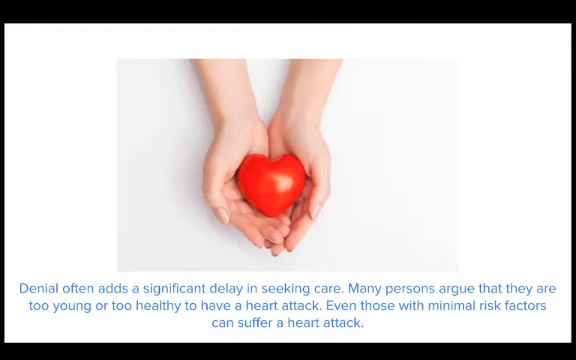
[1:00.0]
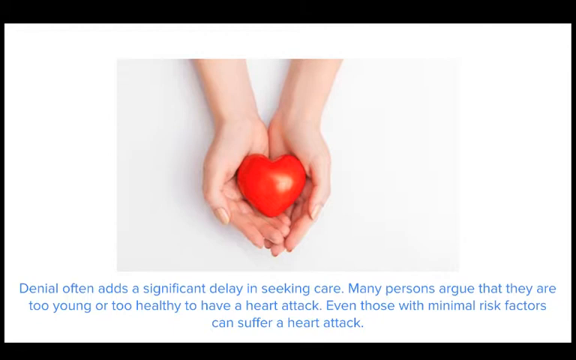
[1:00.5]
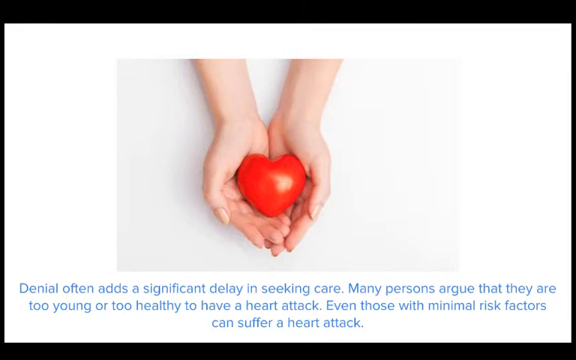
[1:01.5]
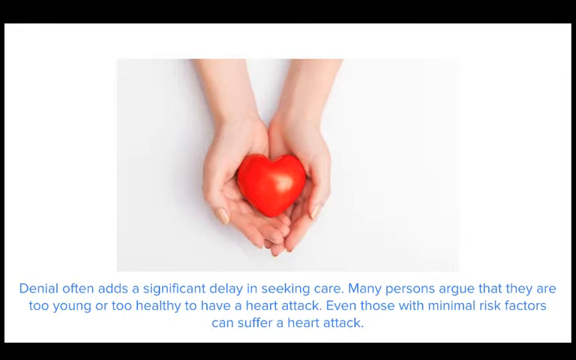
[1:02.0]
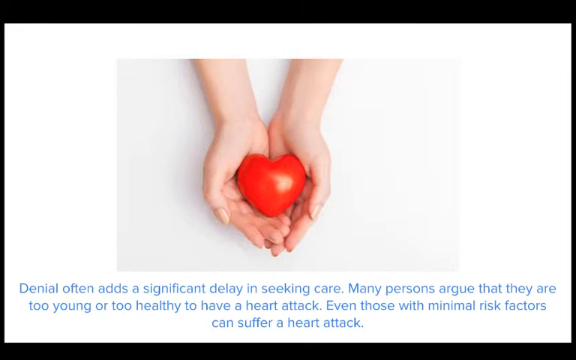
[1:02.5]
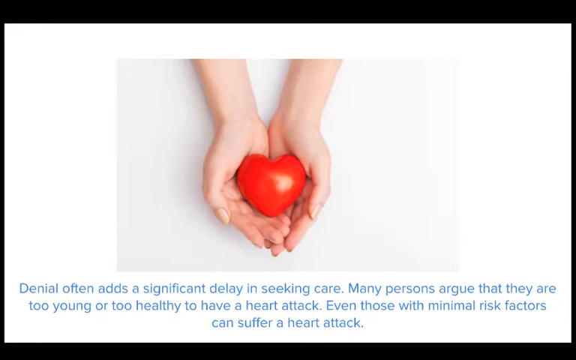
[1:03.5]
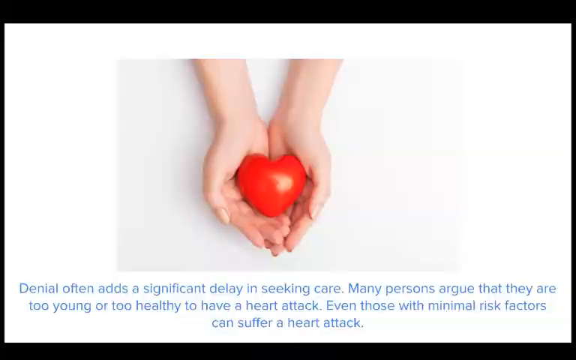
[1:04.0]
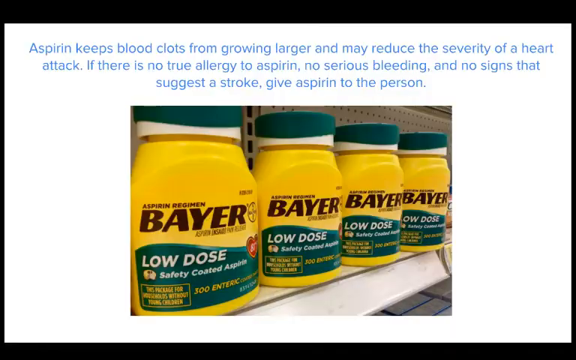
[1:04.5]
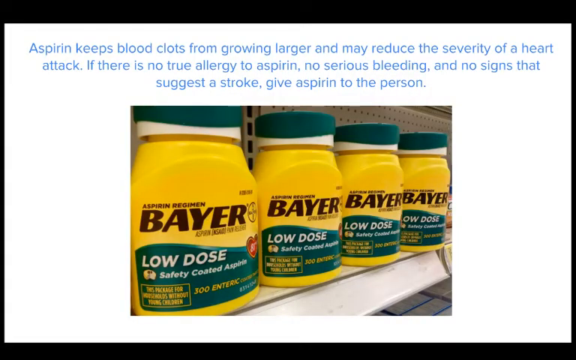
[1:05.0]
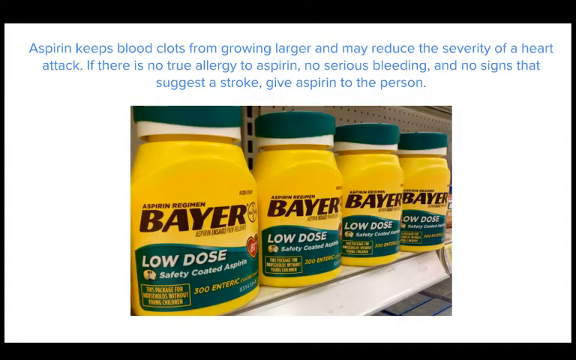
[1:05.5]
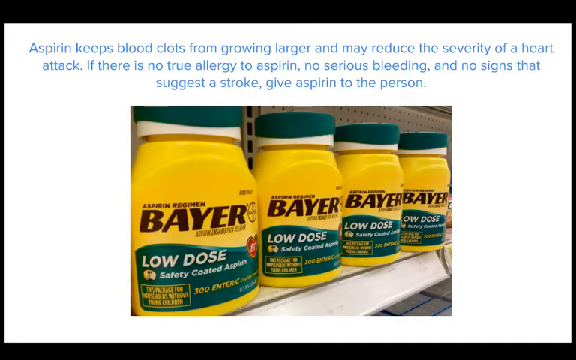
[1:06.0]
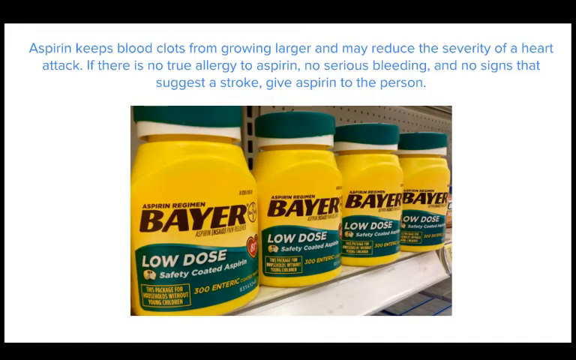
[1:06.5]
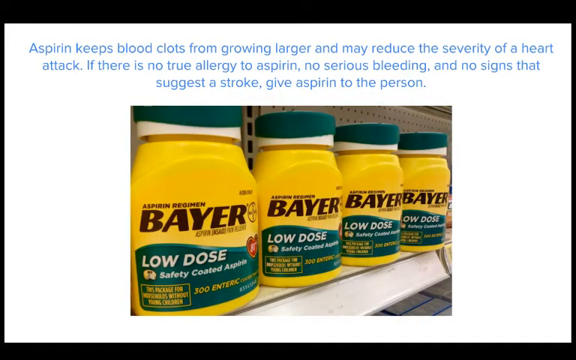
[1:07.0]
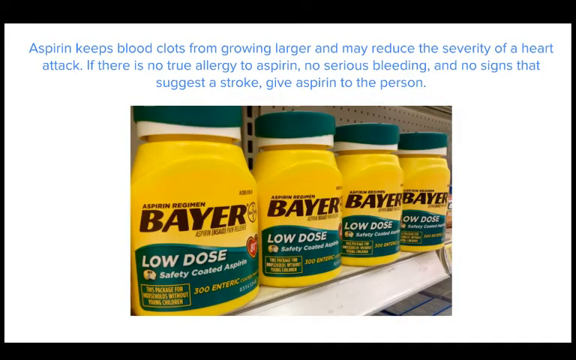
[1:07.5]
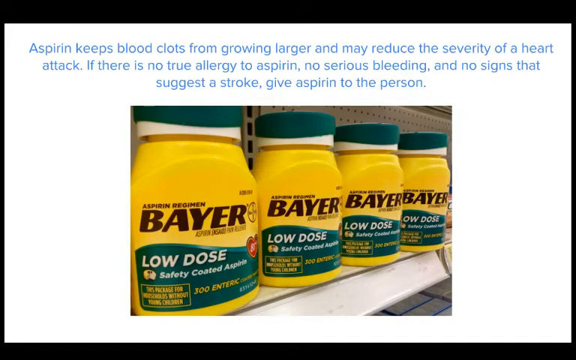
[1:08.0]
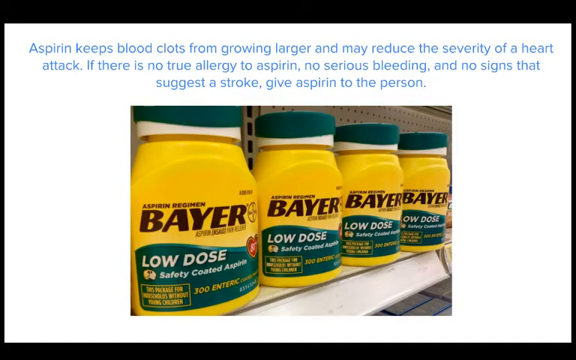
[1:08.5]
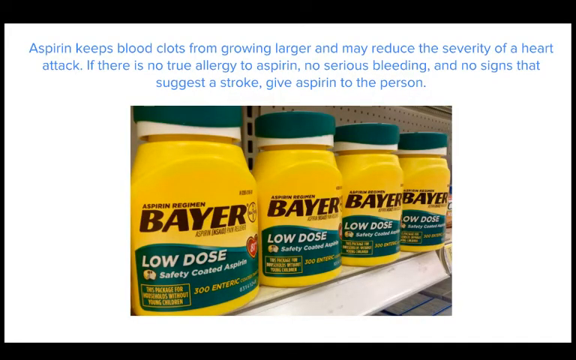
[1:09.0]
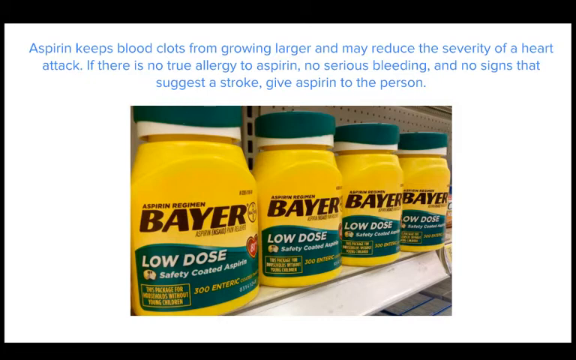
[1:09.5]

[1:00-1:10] The screen shows the white background with the two cupped hands extending down from the top of the screen holding a red love heart, and blue text at the bottom reading "Denial often adds a significant delay in seeking care. Many persons argue that they are too young or too healthy to have a heart attack. Even those with minimal risk factors can suffer a heart attack." The video transitions to a new white screen. Blue text at the top reads: "aspirin keeps blood clots from growing larger and may reduce the severity of a heart attack. If there's no true allergy to aspirin, no serious bleeding, and no signs that suggest a stroke, give aspirin to the person." In the middle of the screen is an image of four yellow bottles with green lids and green labels on the bottom part of each bottle. A brown tag on the top of each bottle says "buyer, aspirin regimen", and white text over the green label reads "low-dose, safety-coated aspirin", with some smaller yellow text at the bottom of the green label. The four aspirin bottles appear to be side by side on a shelf in a convenience store or a supermarket.